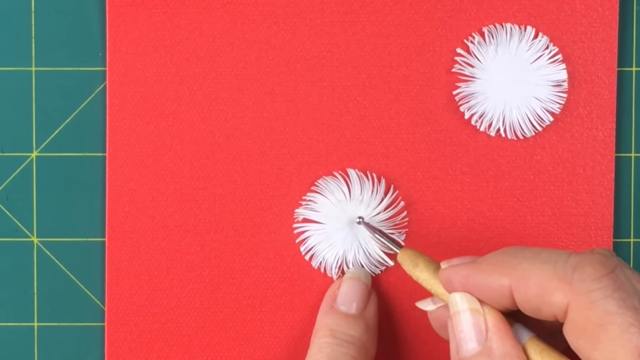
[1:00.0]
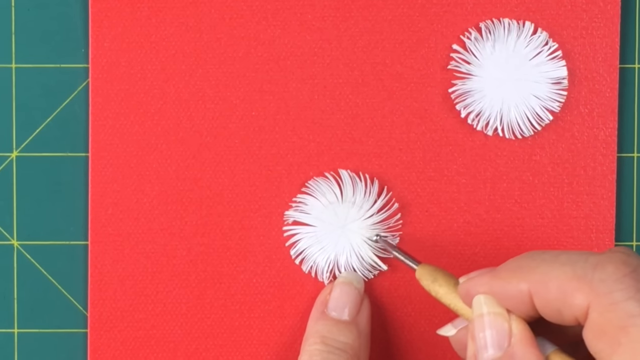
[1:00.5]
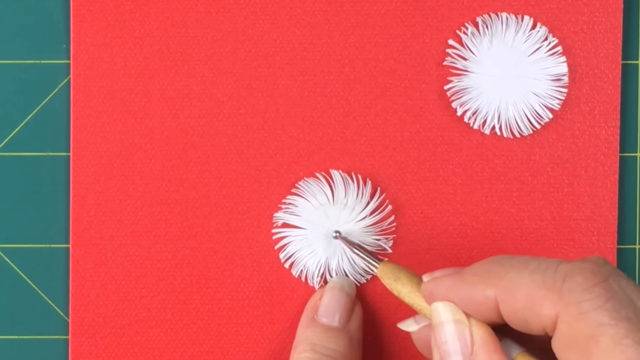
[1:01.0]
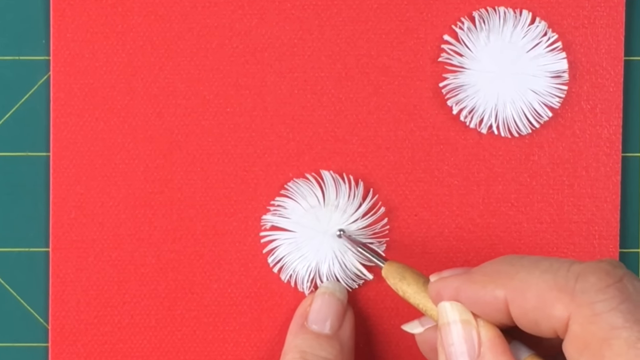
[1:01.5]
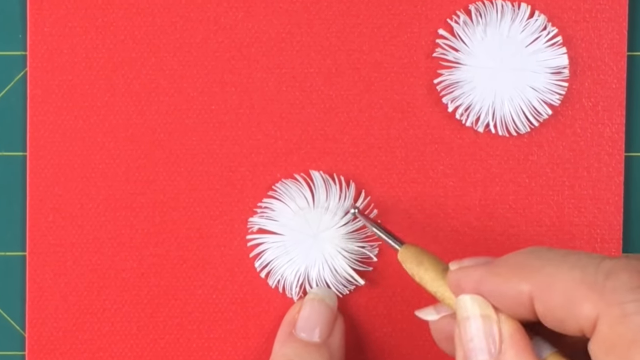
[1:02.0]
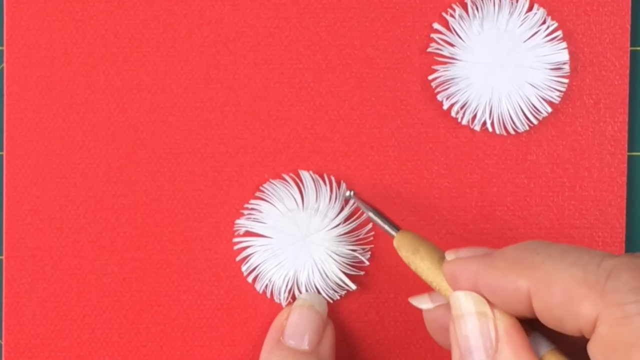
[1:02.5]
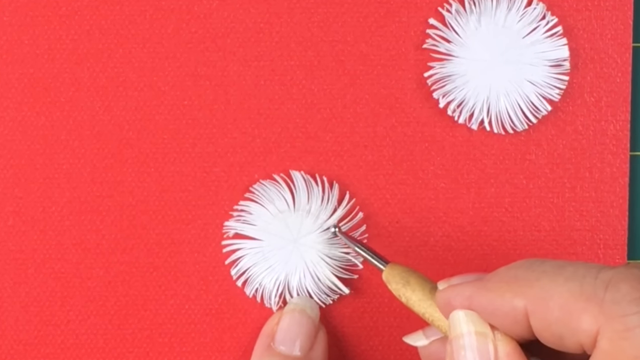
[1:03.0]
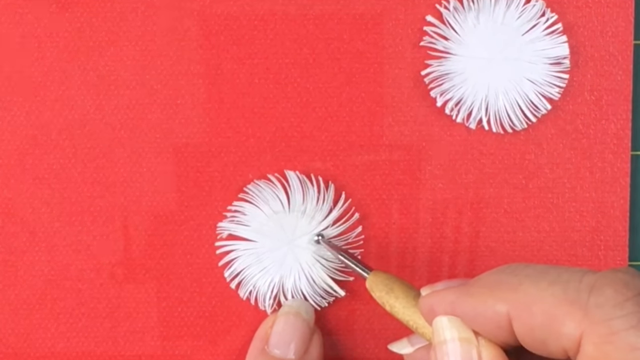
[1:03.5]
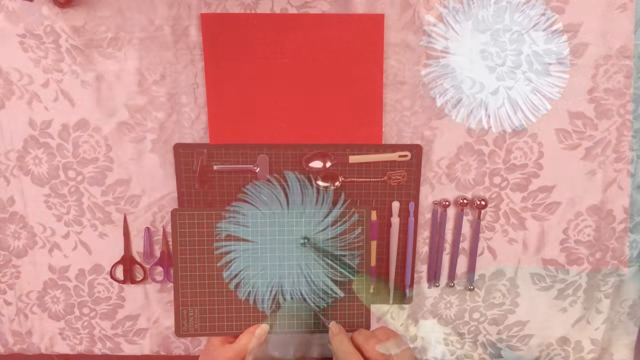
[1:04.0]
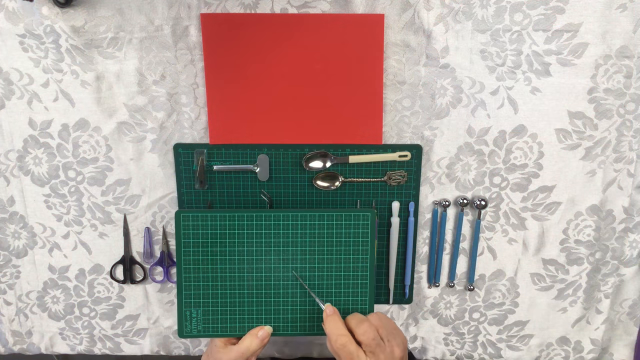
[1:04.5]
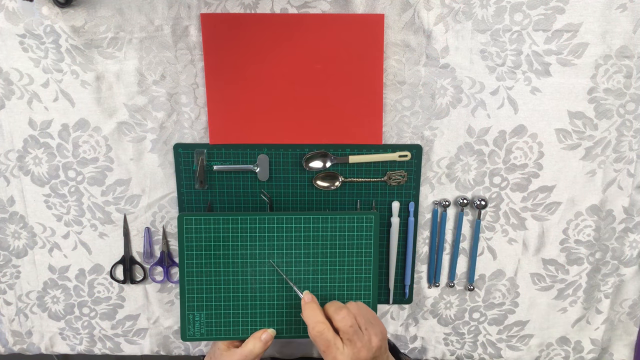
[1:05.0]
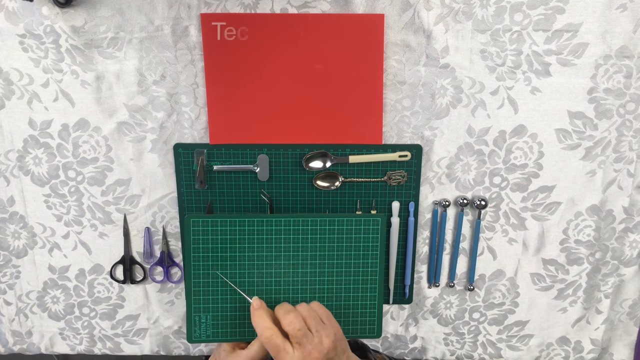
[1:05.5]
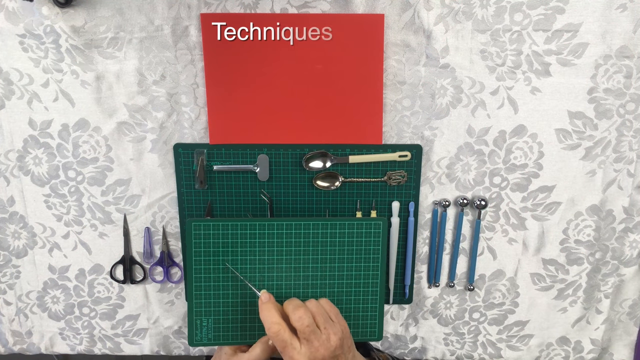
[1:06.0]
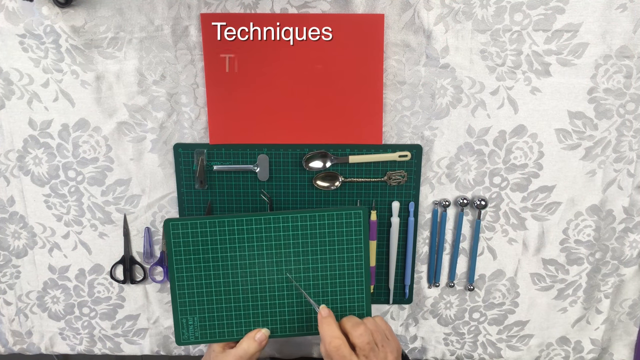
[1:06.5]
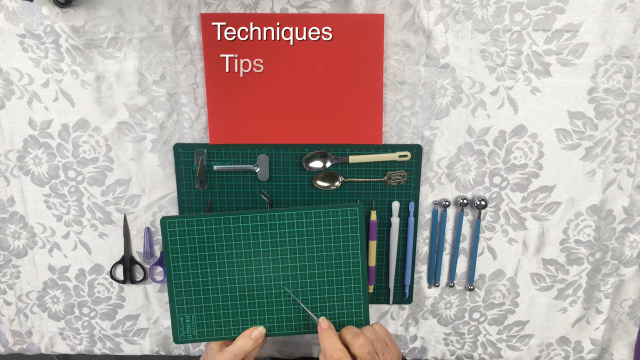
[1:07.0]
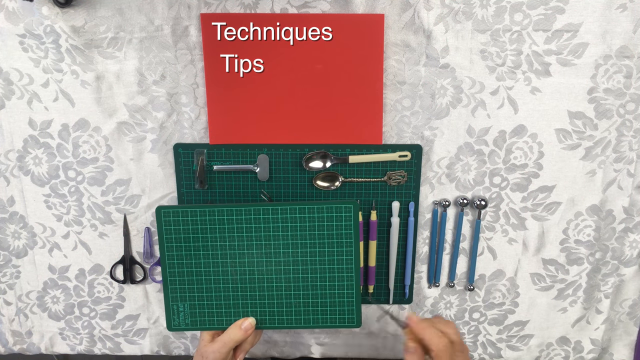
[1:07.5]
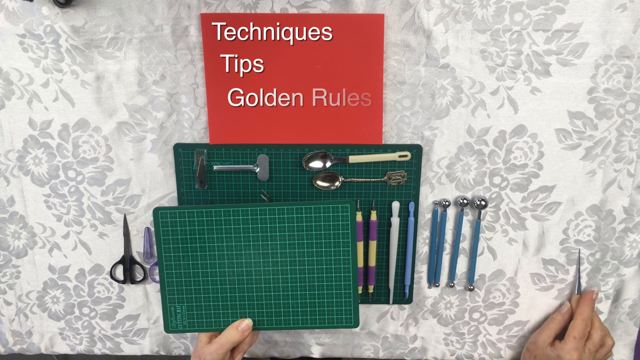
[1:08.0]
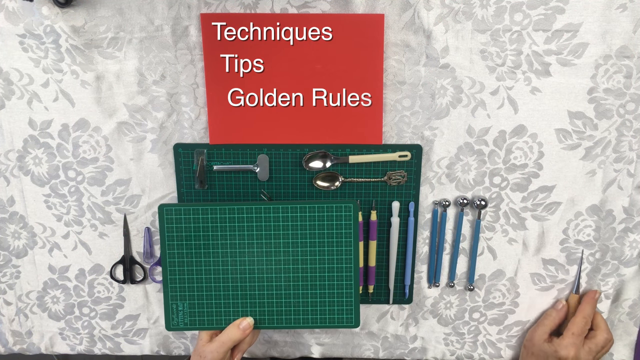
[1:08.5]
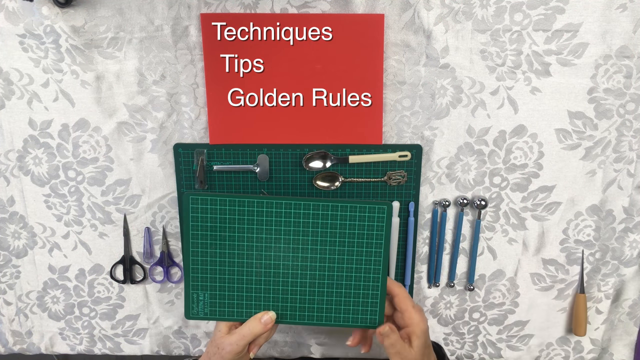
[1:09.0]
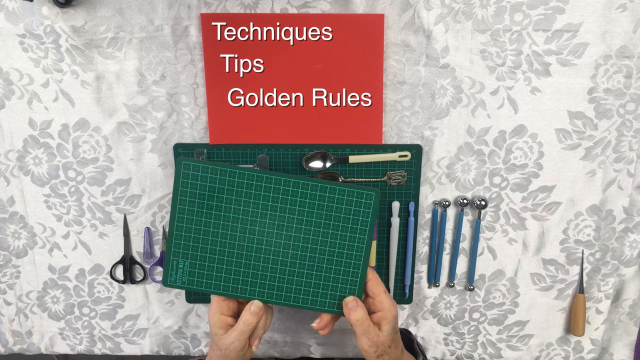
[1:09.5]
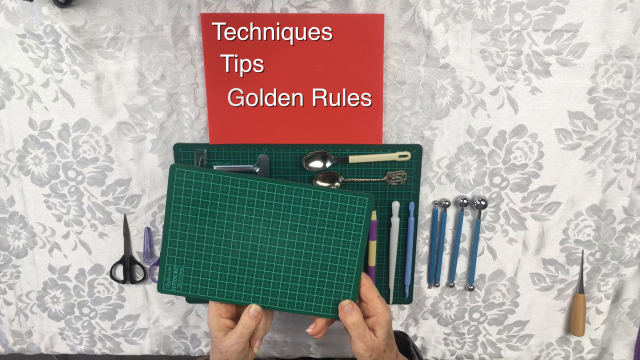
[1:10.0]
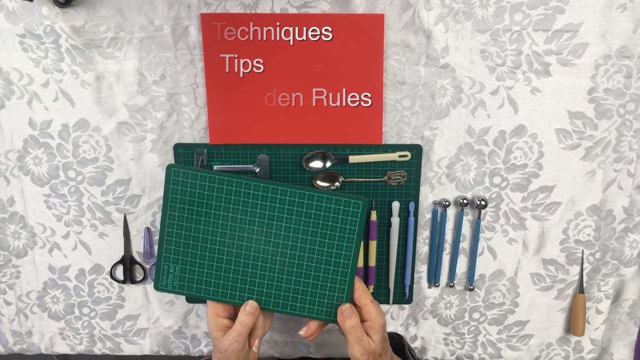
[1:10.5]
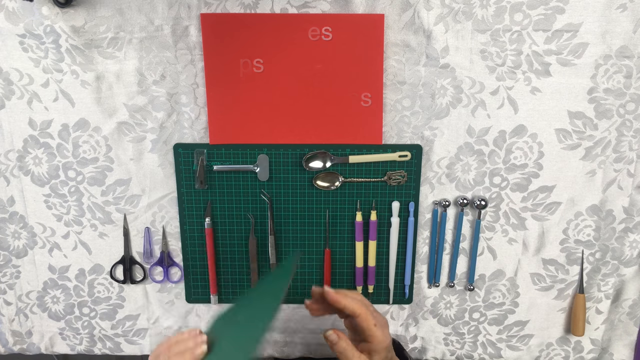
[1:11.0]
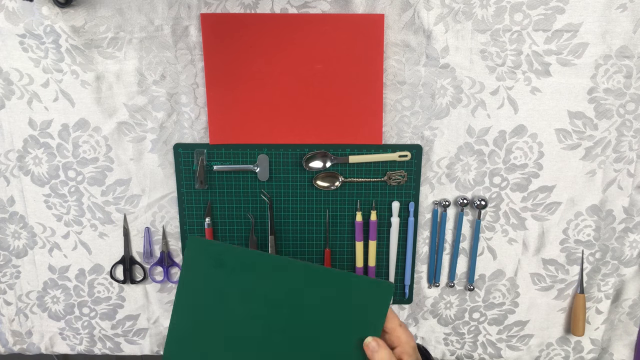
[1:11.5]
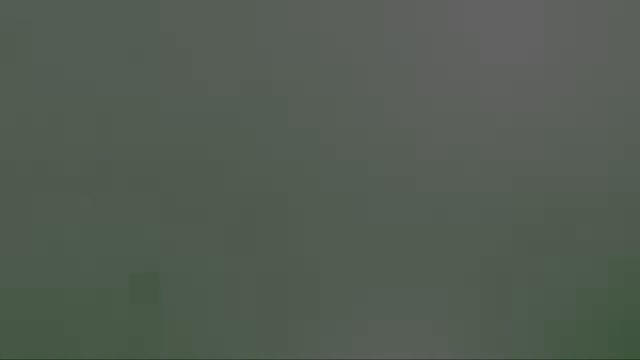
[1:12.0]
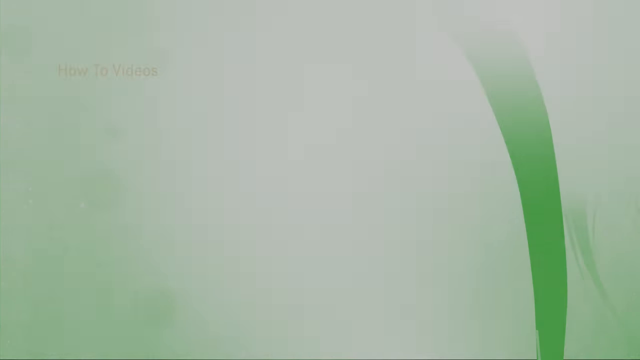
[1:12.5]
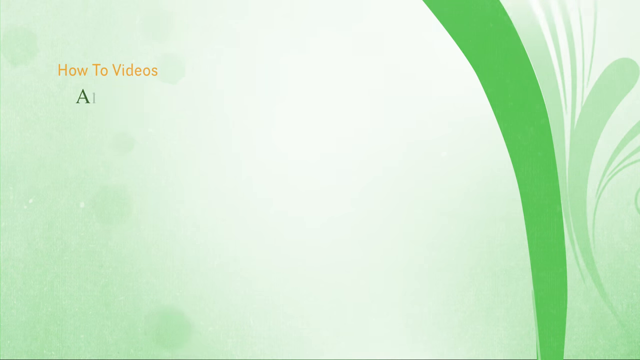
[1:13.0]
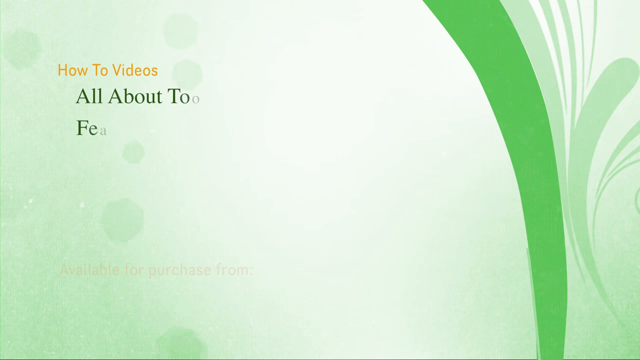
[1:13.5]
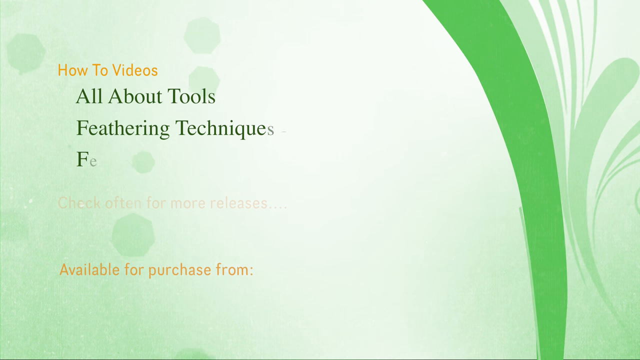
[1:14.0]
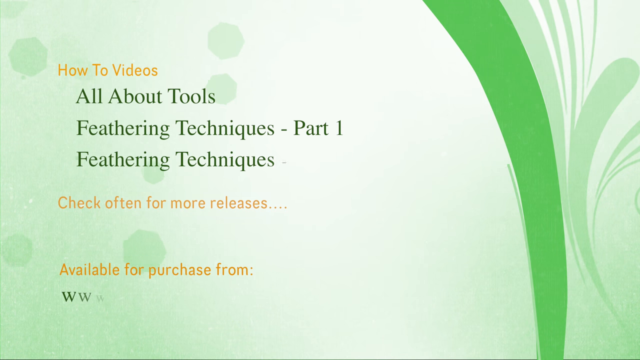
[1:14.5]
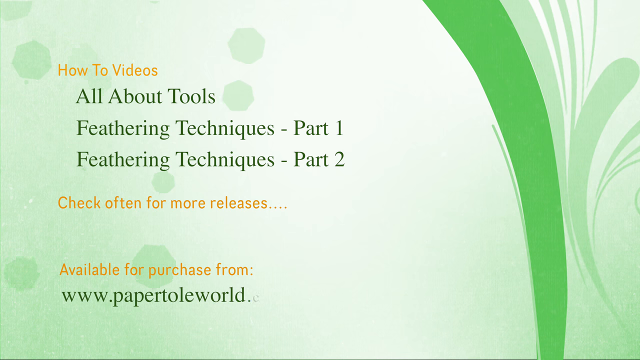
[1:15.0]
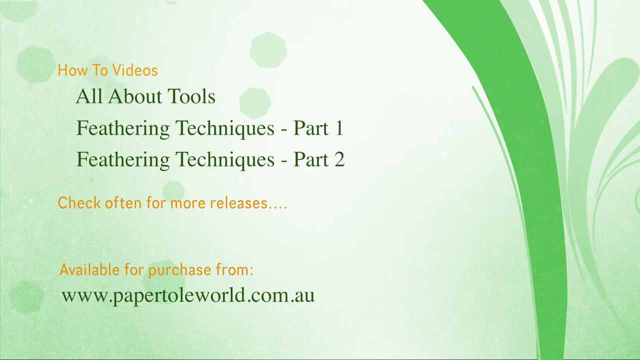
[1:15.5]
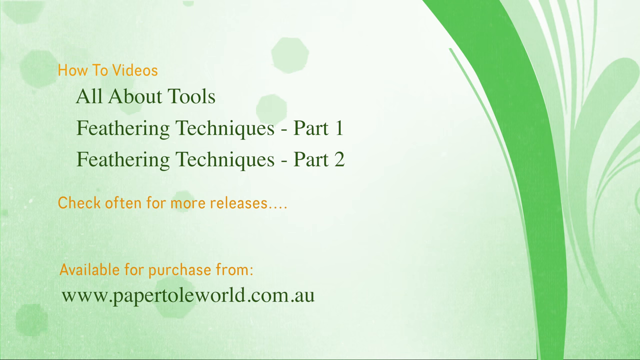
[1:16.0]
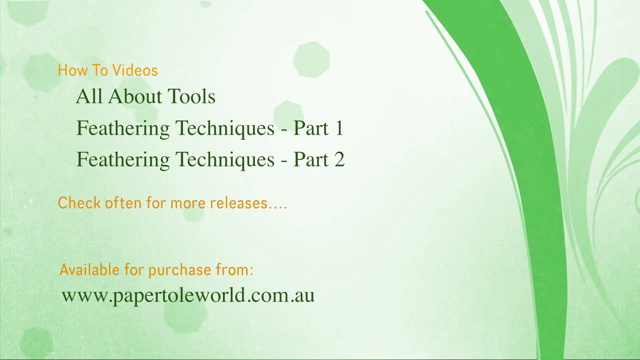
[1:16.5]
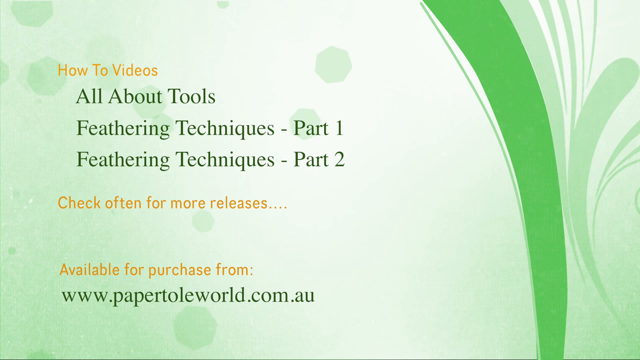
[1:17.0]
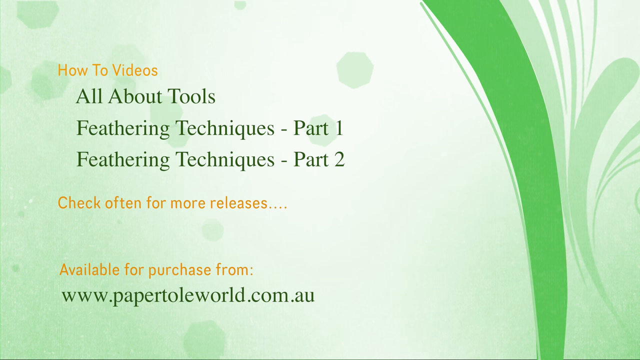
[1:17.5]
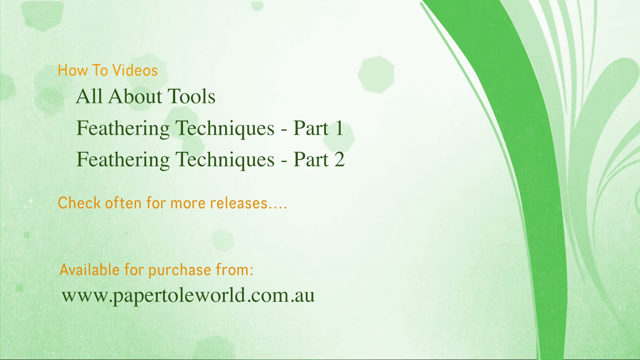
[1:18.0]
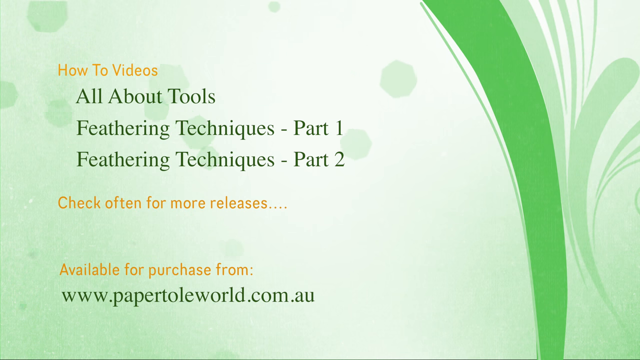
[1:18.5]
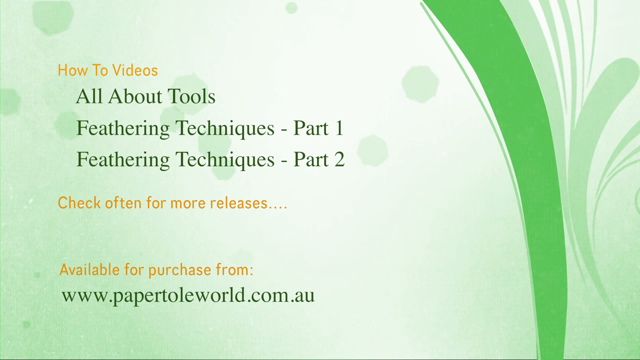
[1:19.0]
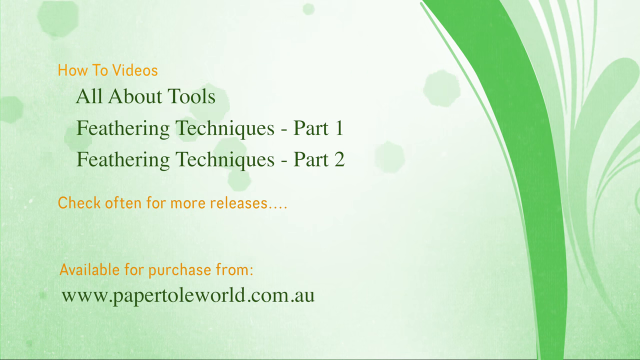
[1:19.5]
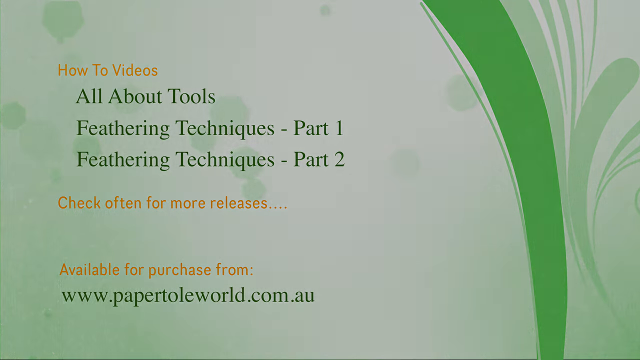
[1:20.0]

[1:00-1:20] Circular feather-like patterns are placed on a red mat and arranged using a small wooden dotting tool. The red mat is placed on the green cutting board. This is the second step of the DIY project. The feather patterns are moved with the dotting tool from inside to outside in a gentle manner. Then the third part, explaining tools, is shown, with labels such as "techniques", "tips" and "golden rules", and all the tools arranged on the green mat. An end screen follows, with a light and thick green background and some patterns on the right side. It has three sections: "how-to videos", "check often for more releases" and "available for purchase from", under which "www.papertoolworld" is written. The how-to videos section lists "all about tools" and "feathering techniques part one" and "part two".